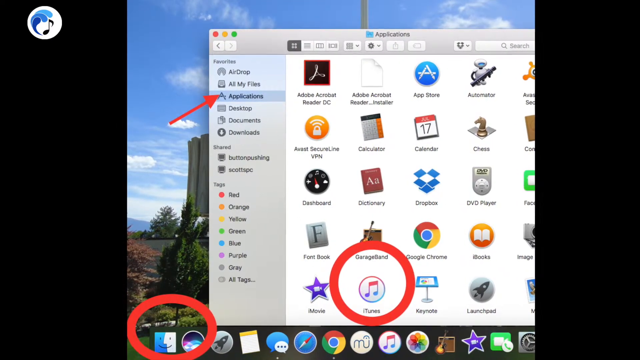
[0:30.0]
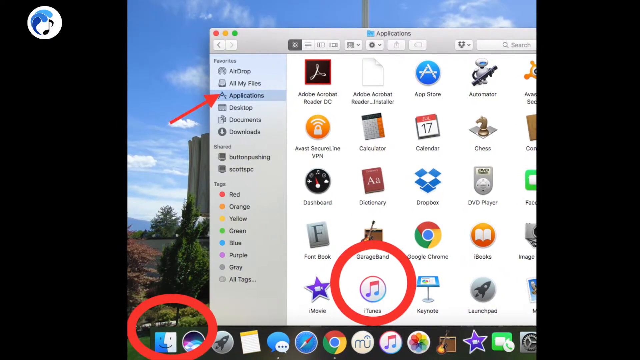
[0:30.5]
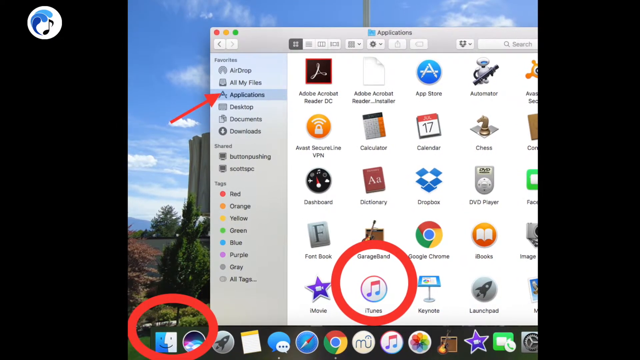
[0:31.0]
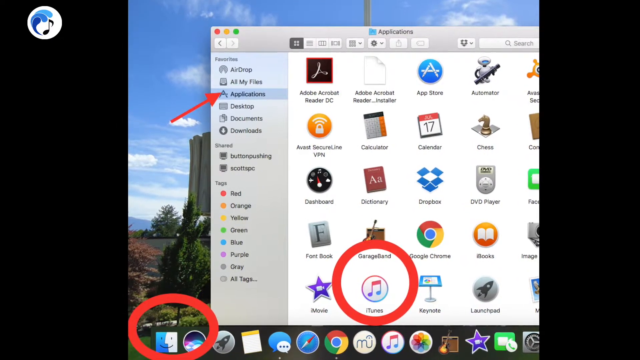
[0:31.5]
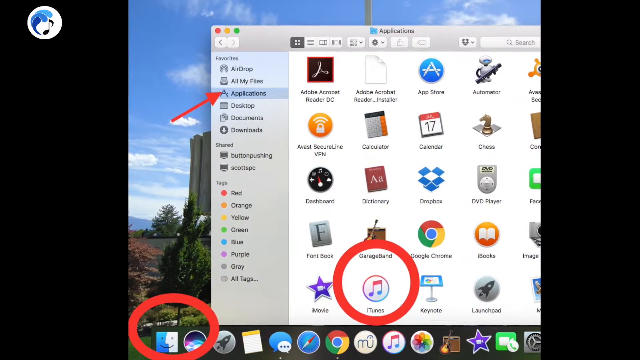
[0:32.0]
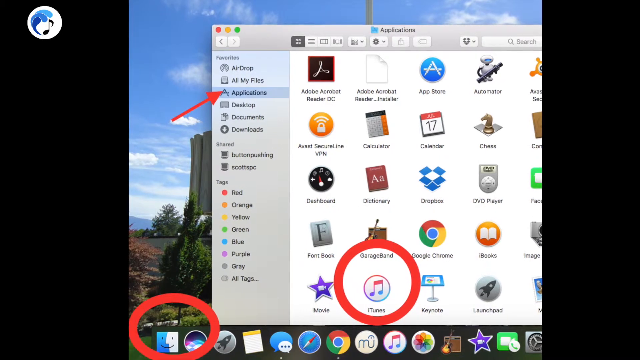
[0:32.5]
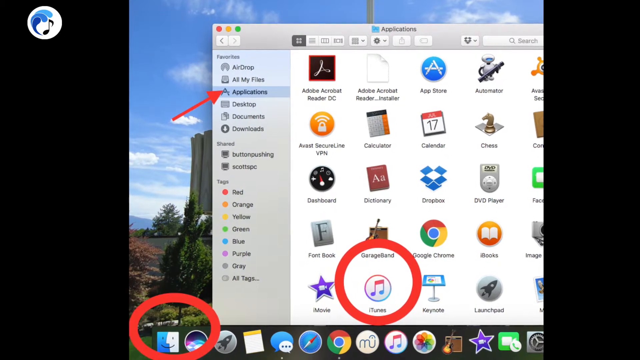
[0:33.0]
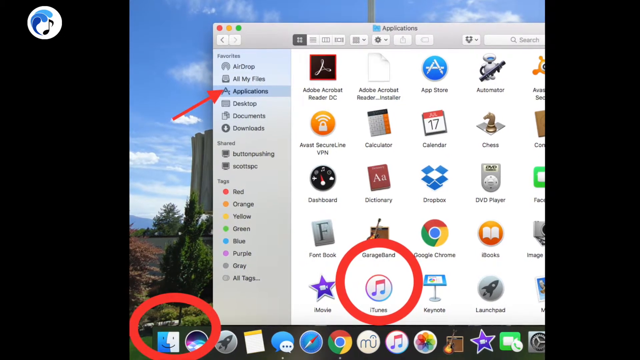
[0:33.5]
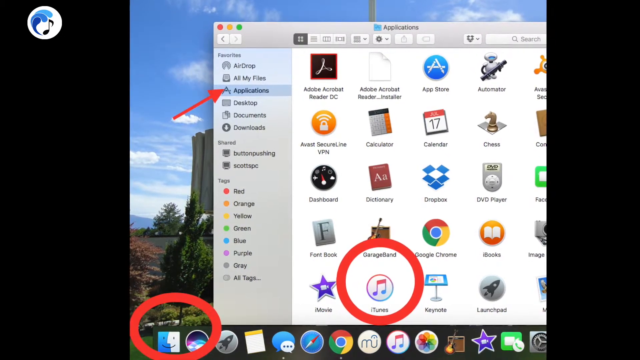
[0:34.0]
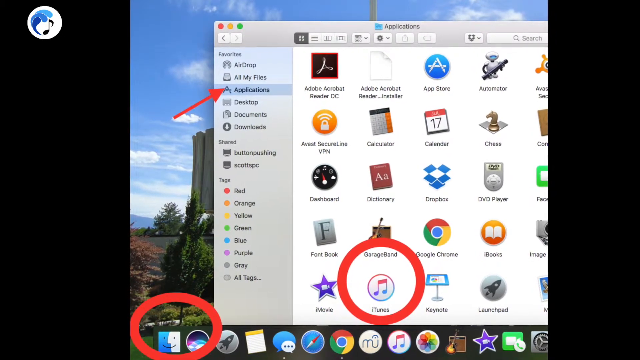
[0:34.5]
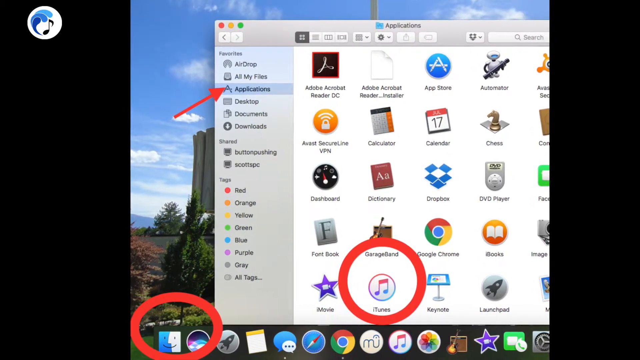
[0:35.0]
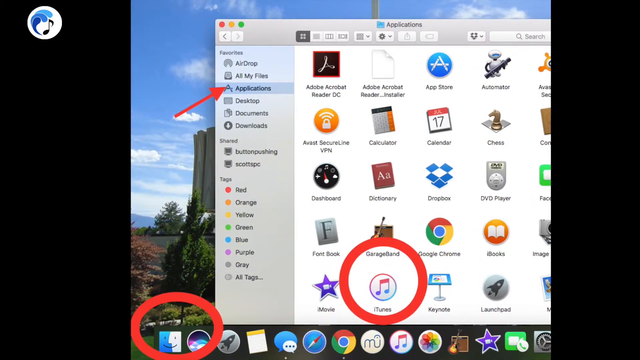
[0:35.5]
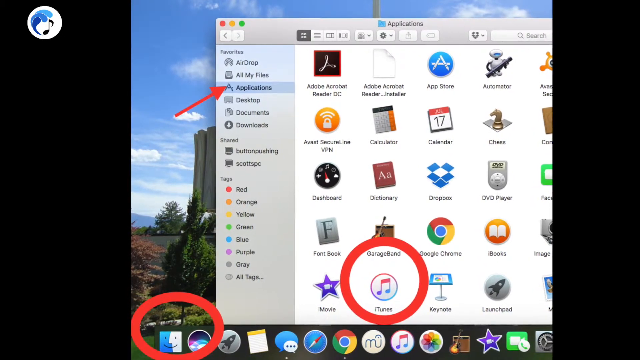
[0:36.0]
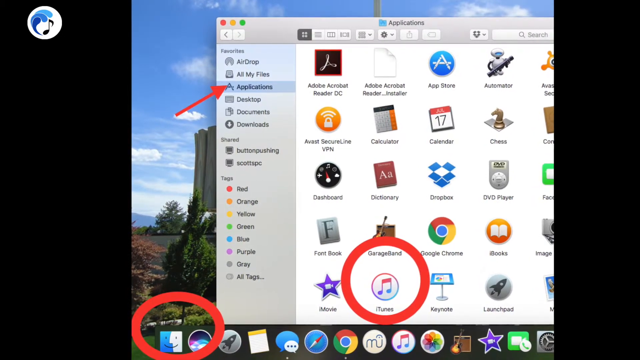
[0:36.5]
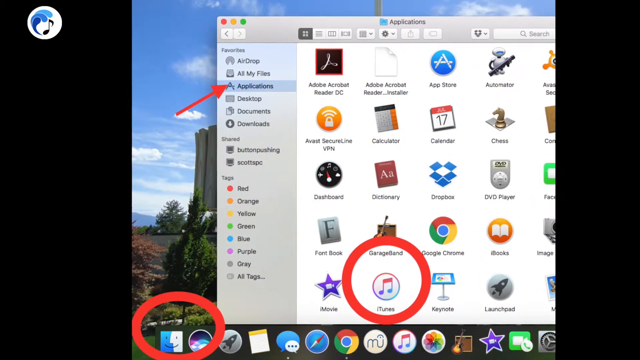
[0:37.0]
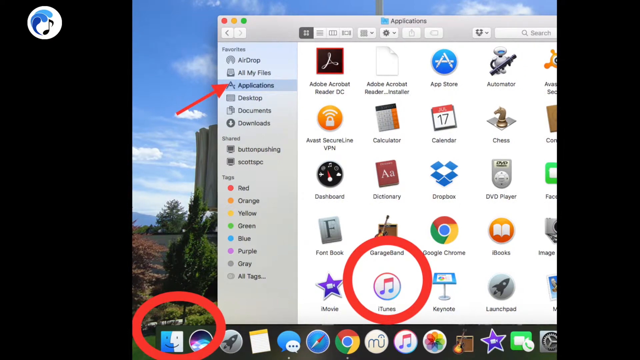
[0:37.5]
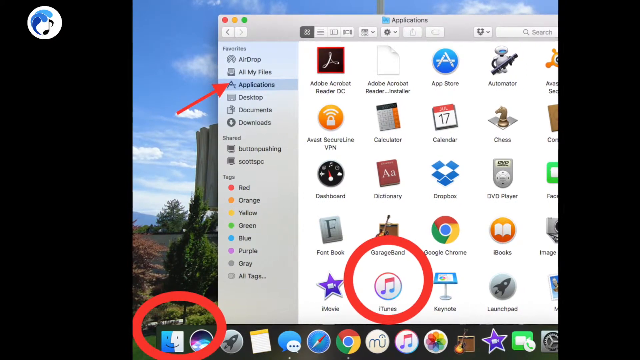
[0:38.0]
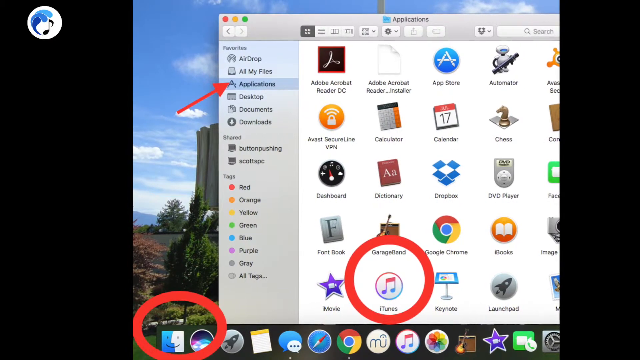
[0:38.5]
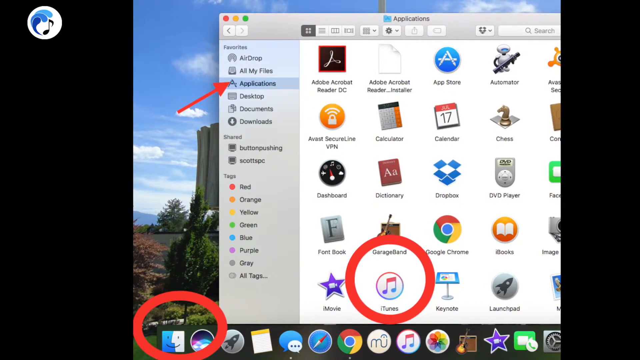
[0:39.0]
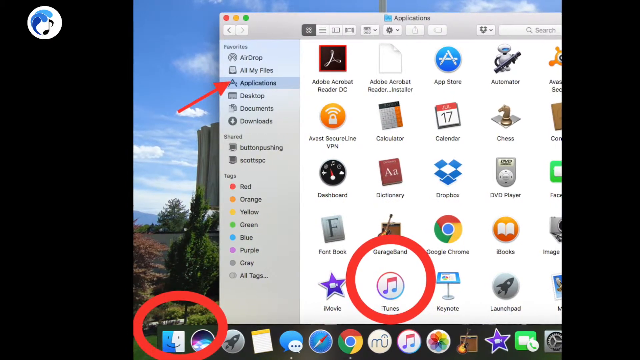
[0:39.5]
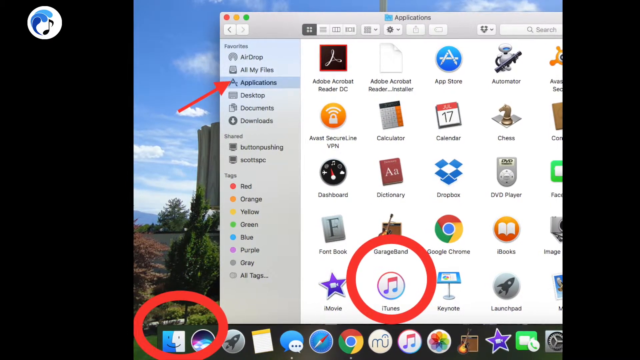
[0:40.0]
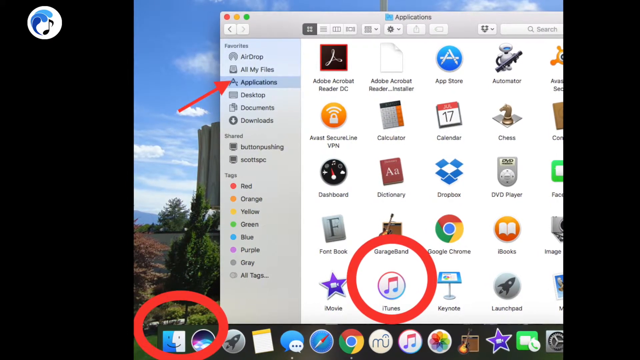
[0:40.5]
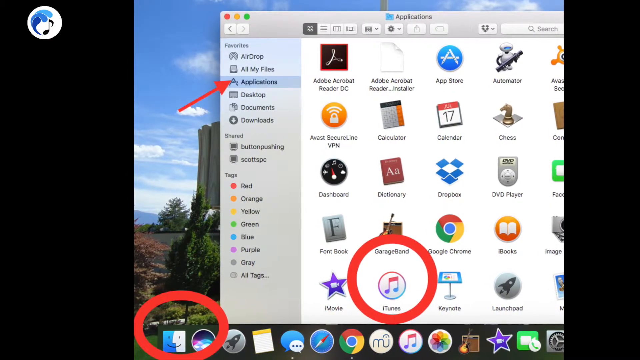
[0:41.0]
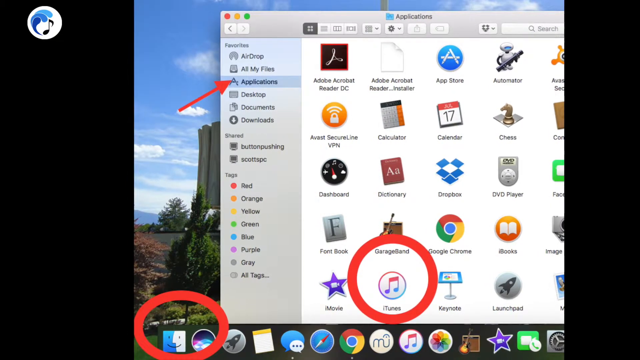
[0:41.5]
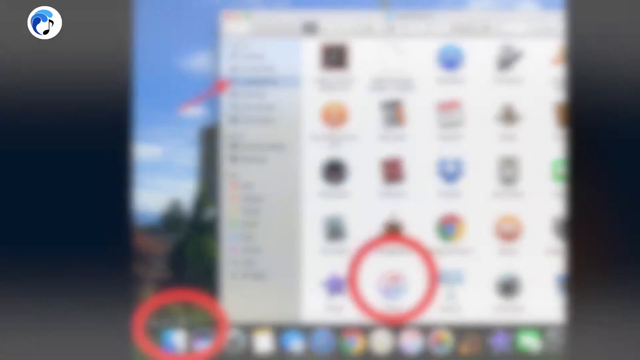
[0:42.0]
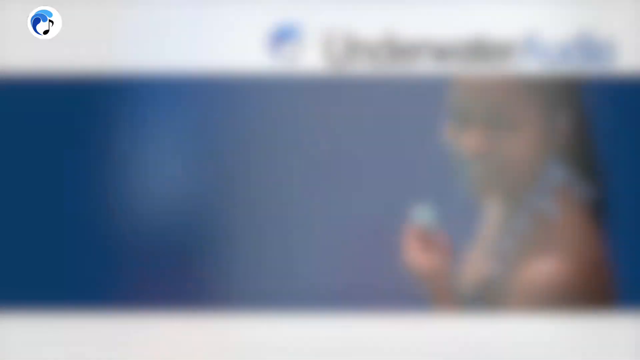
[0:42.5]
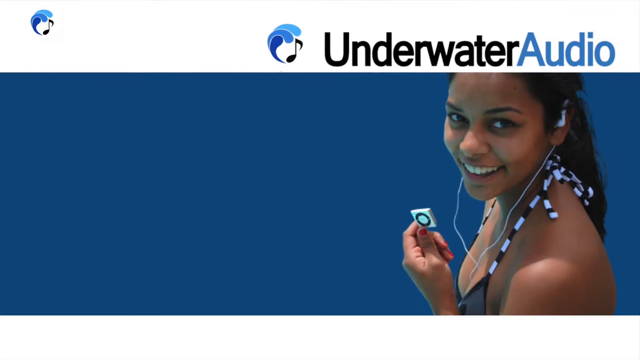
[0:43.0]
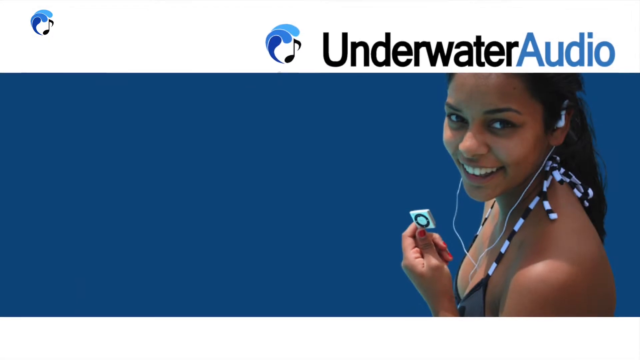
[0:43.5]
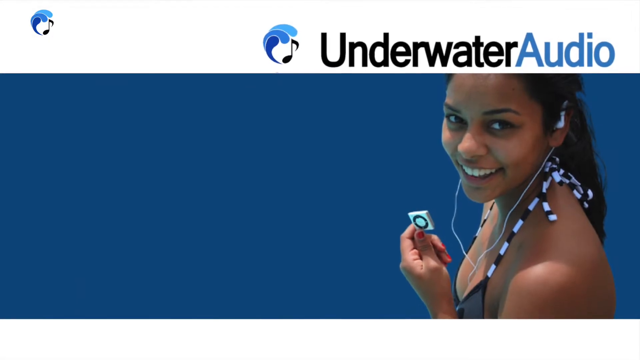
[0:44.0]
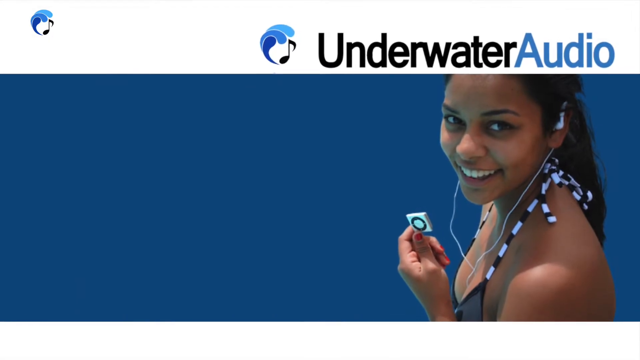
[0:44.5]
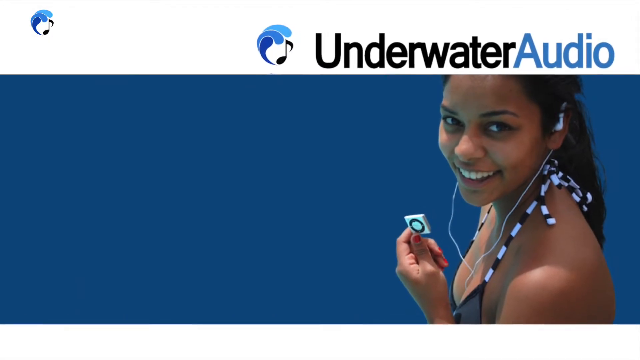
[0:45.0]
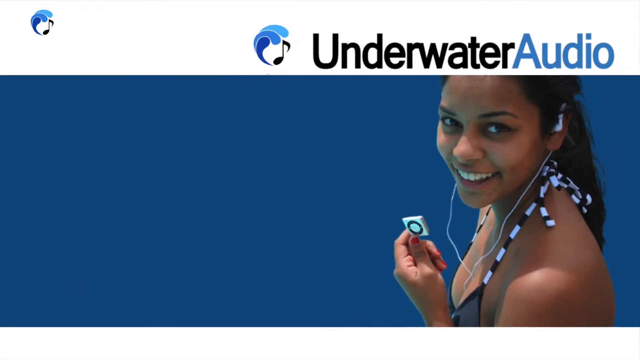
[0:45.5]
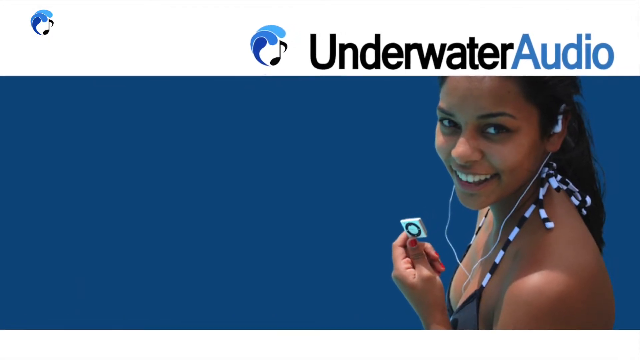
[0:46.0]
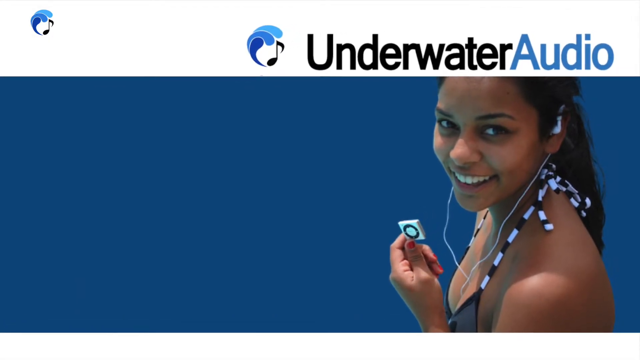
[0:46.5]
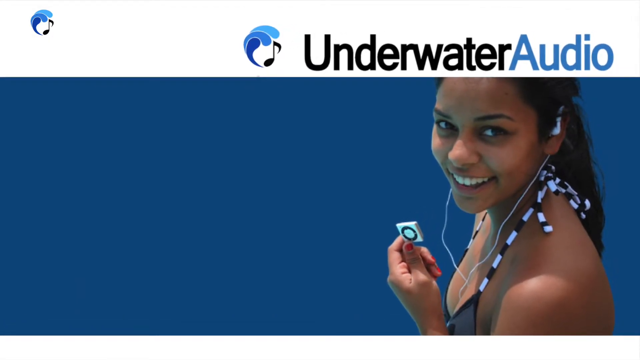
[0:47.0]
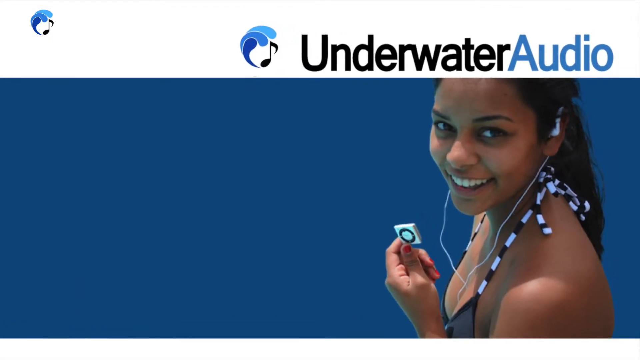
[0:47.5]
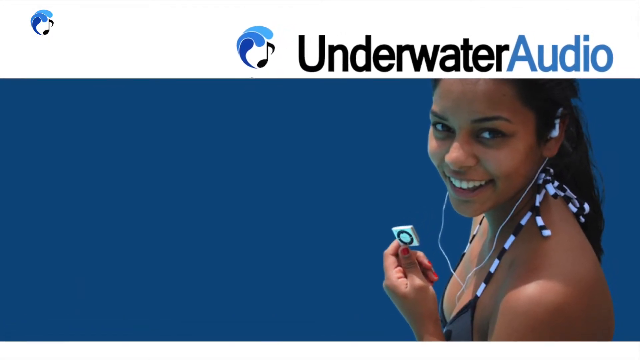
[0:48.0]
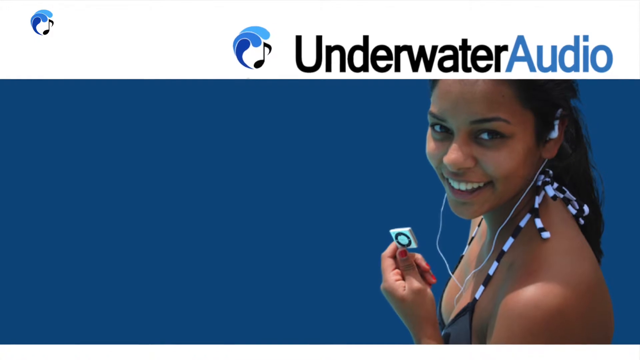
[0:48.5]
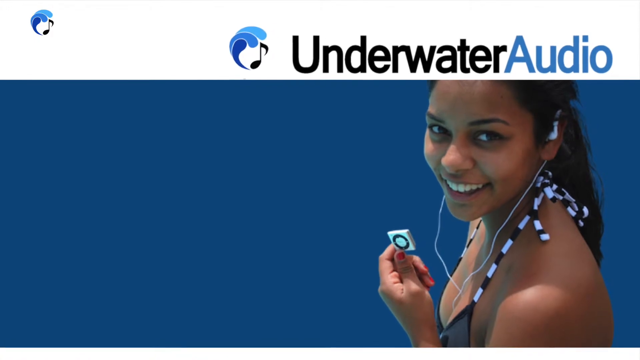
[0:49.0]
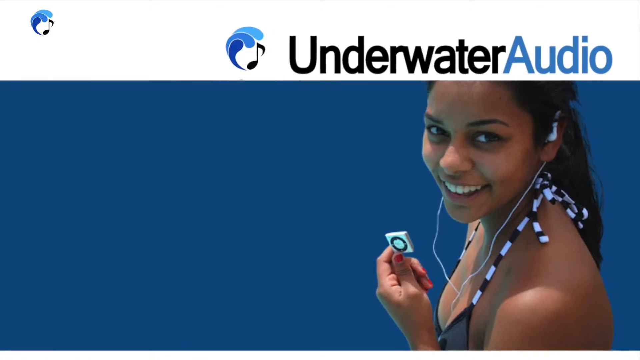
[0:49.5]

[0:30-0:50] The Finder page on a MacBook remains on screen. The computer's background shows a blue sky with white clouds, natural rock formations and trees, mostly cut off because the Applications window is above it. The apps listed include Adobe Acrobat Reader DC, App Store, Automator, one that is cut off, Avast SecureLine VPN, Calculator, Calendar, Chess, Dashboard, Dictionary, Dropbox, DVD Player, FaceTime, Font Book, GarageBand, Google Chrome, Books, Image, another cut-off one, iMovie, iTunes (the circled one), Keynote, Launch, and another that is cut off. The video then switches back to the original underwater audio screen with the smiling woman holding the iPod shuffle, but all the text is gone except "underwater audio."